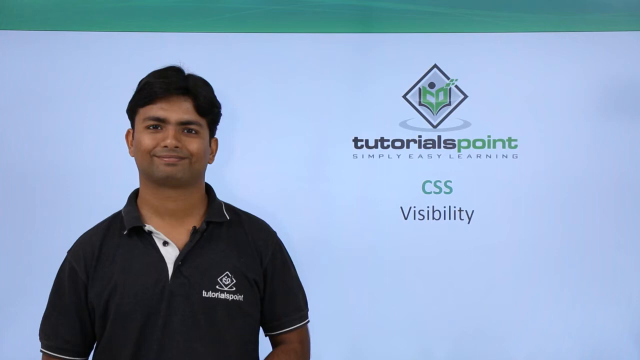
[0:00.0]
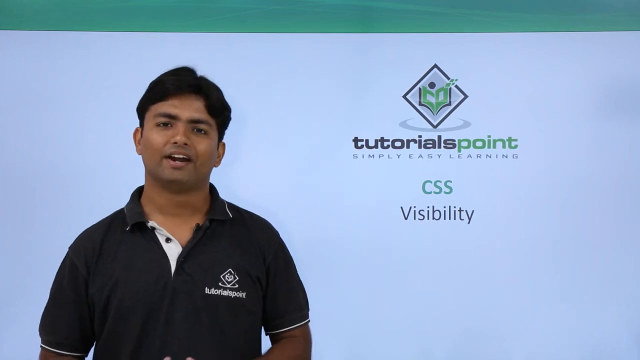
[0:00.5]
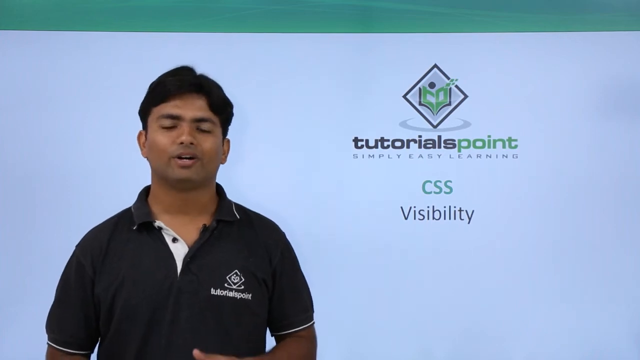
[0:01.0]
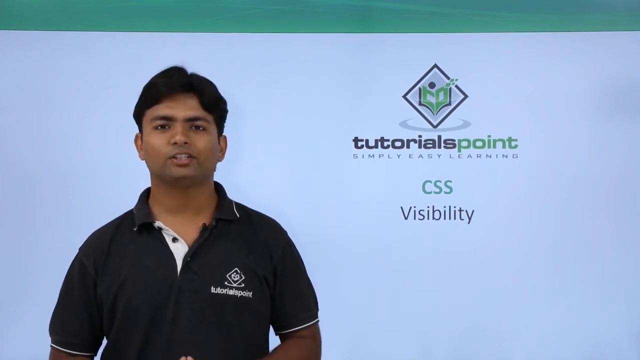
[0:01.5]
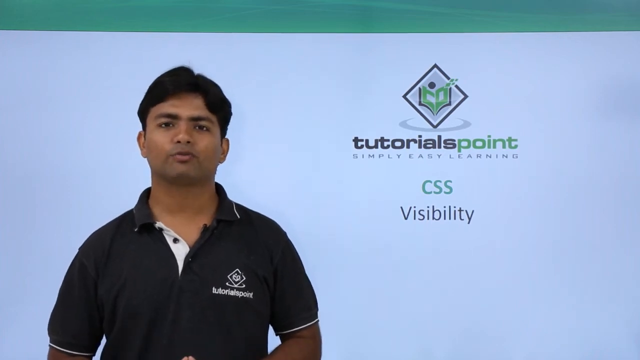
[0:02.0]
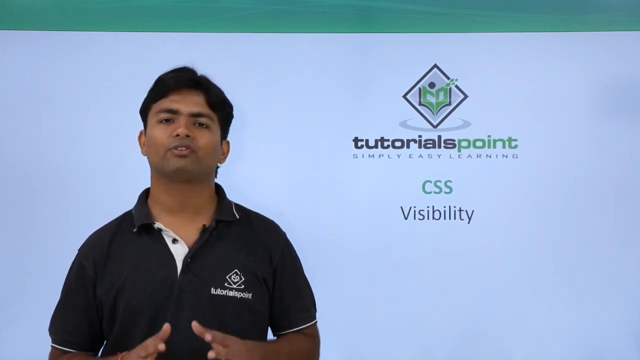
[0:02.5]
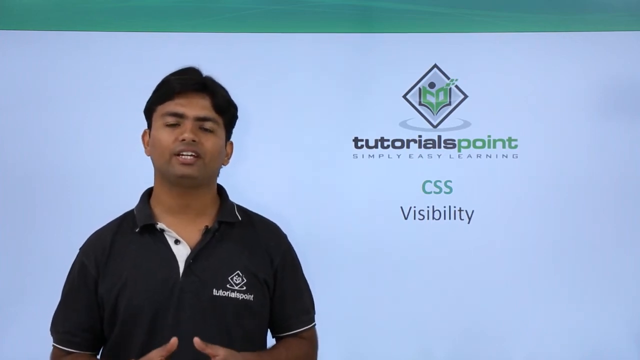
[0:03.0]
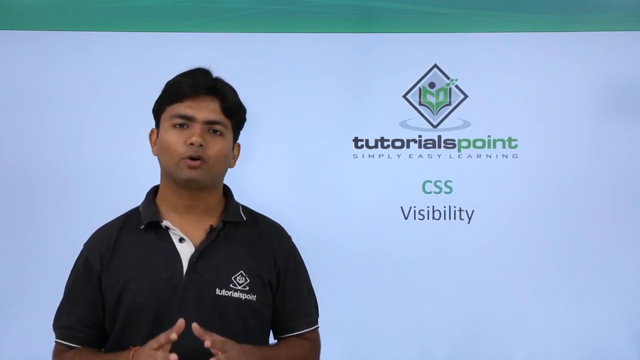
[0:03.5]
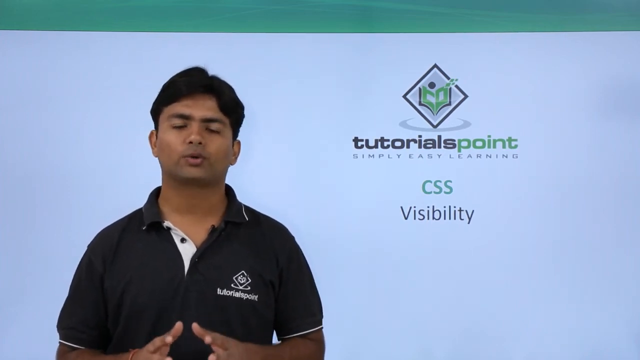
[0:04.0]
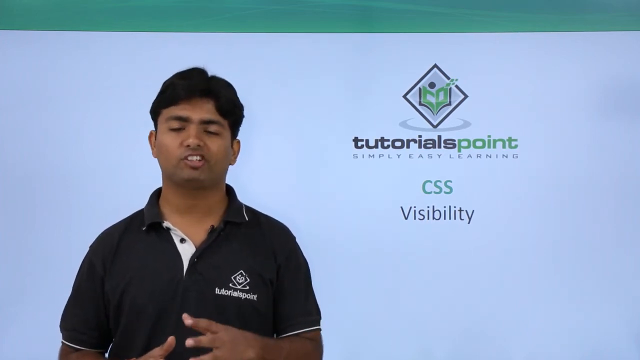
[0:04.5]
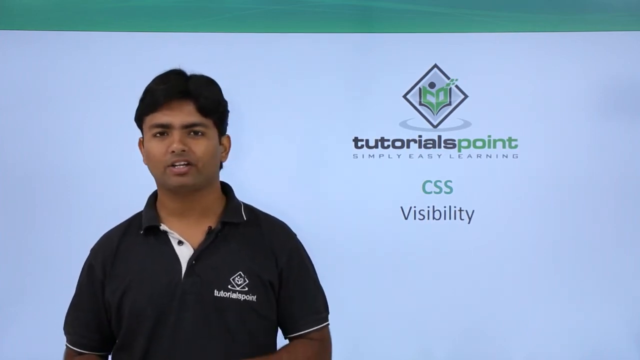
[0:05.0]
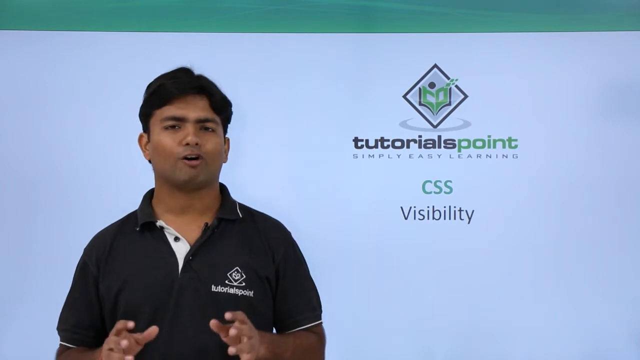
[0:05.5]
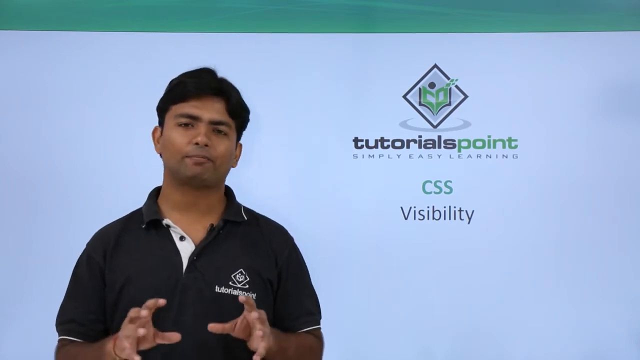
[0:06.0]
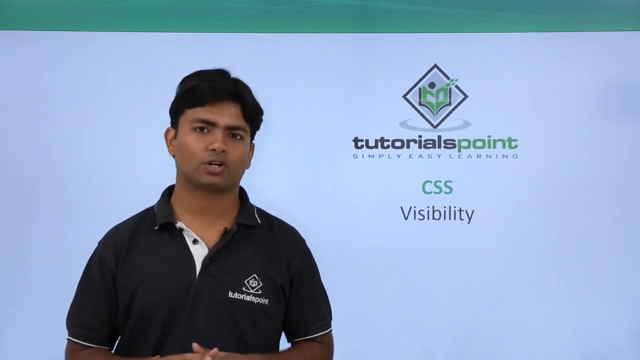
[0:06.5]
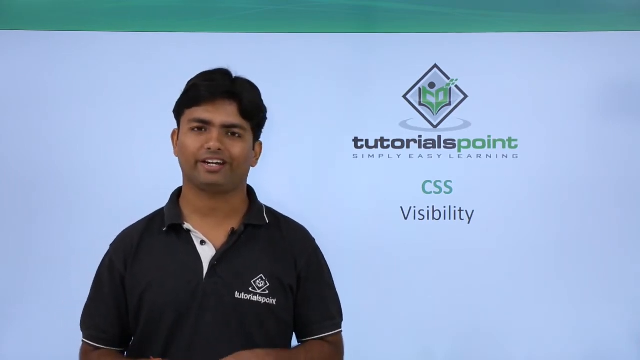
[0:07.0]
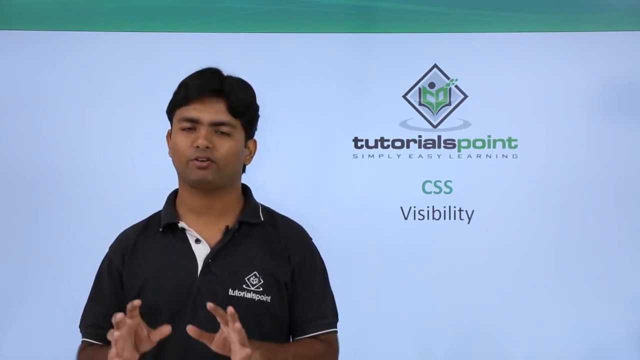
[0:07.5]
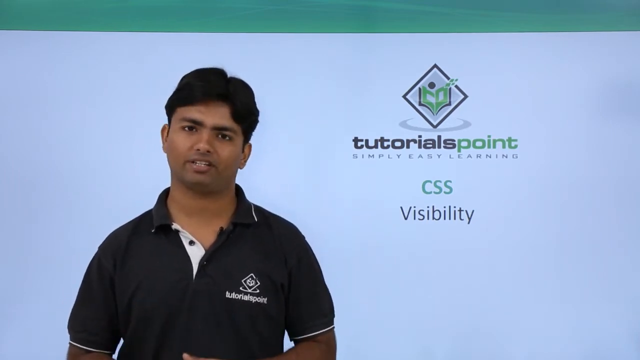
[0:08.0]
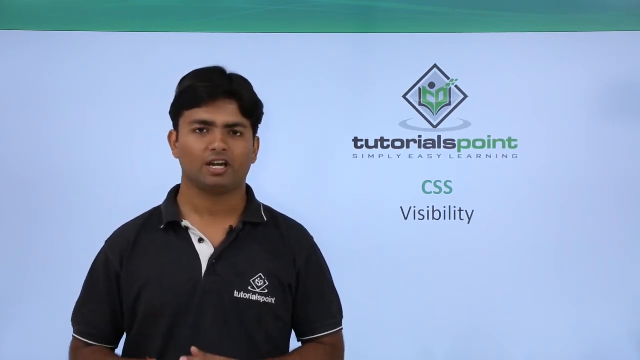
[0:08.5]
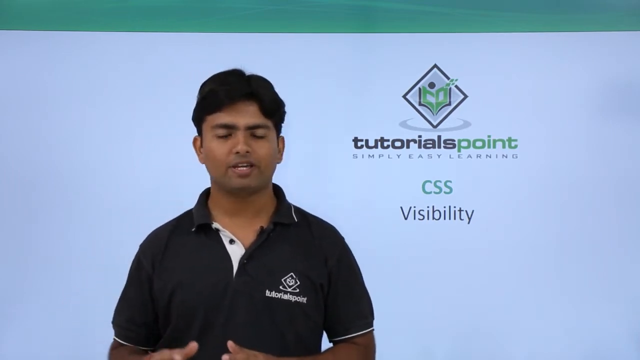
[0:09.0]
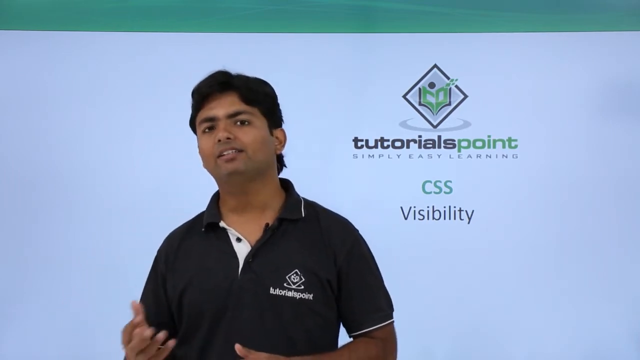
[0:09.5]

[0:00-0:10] A brown-skinned man, probably aged 20 to 25 and apparently Indian or East Indian, wears a black shirt. On-screen text reads "tutorial point CSS visibility" on a light background, probably part of a tech tutorial about CSS styling for the web. He appears to be explaining the topic. The shot stays on this one man, with a light blue "tutorials point CSS visibility" intro screen.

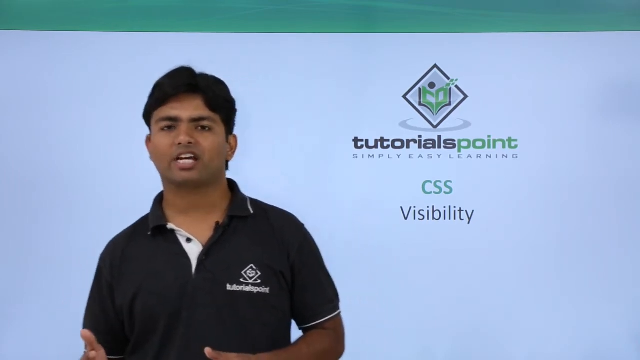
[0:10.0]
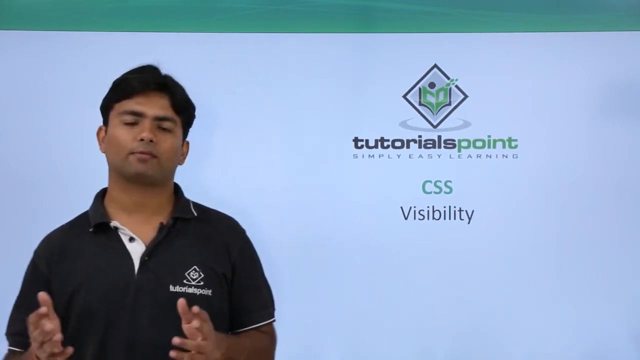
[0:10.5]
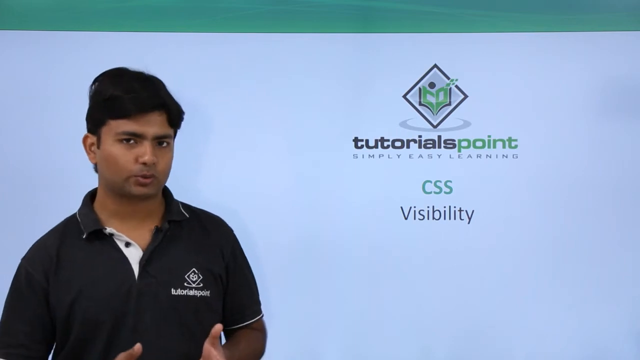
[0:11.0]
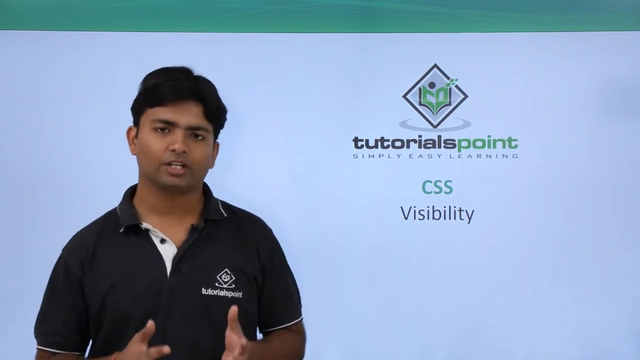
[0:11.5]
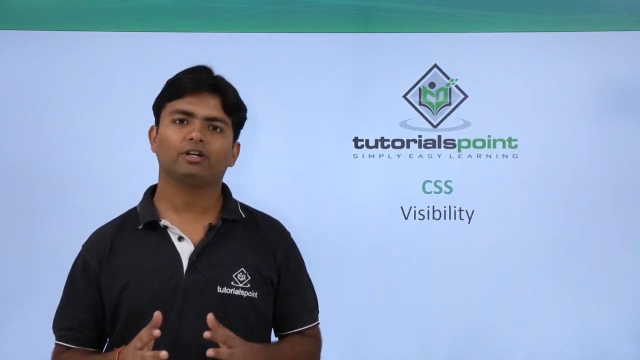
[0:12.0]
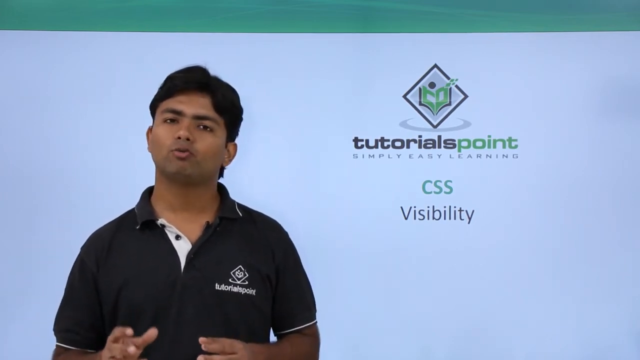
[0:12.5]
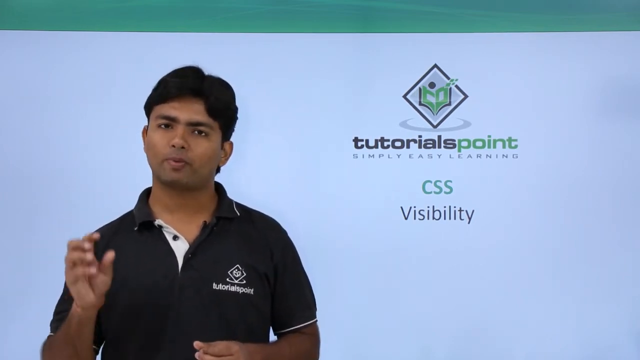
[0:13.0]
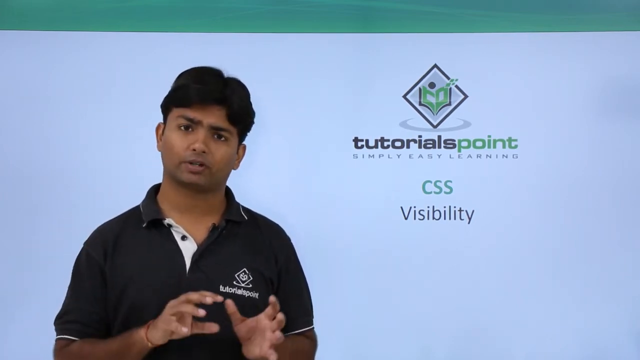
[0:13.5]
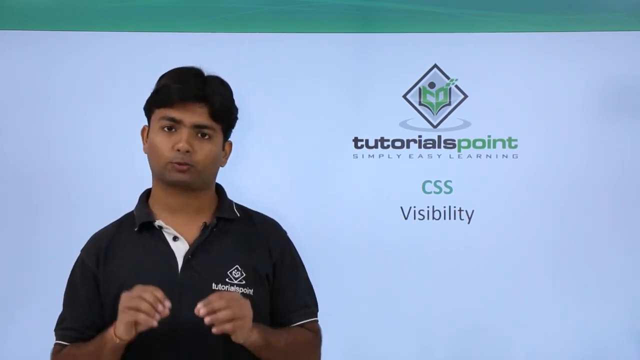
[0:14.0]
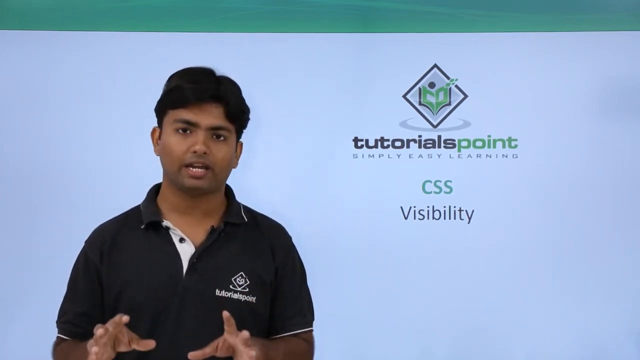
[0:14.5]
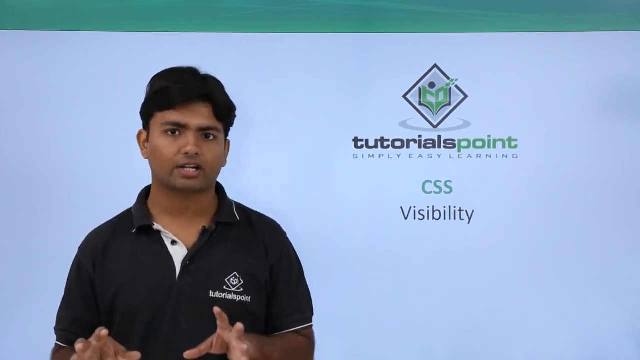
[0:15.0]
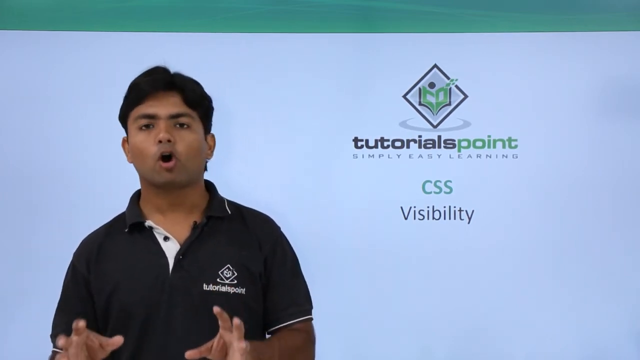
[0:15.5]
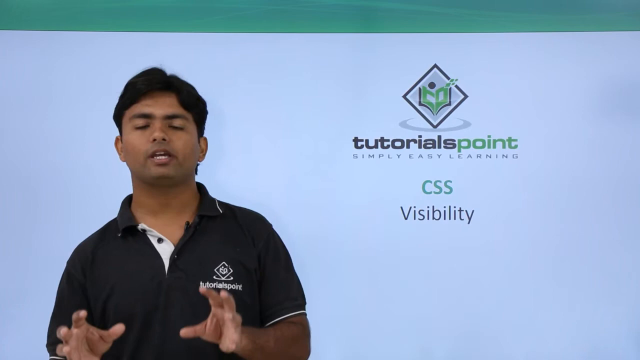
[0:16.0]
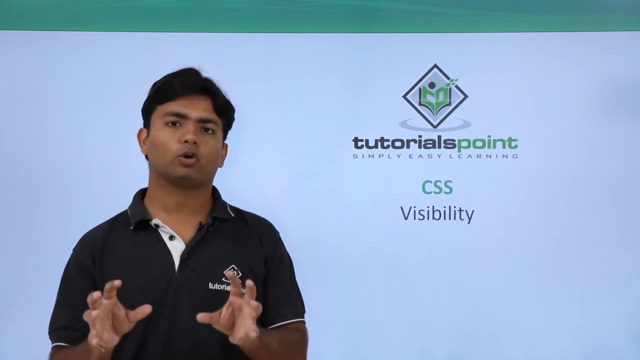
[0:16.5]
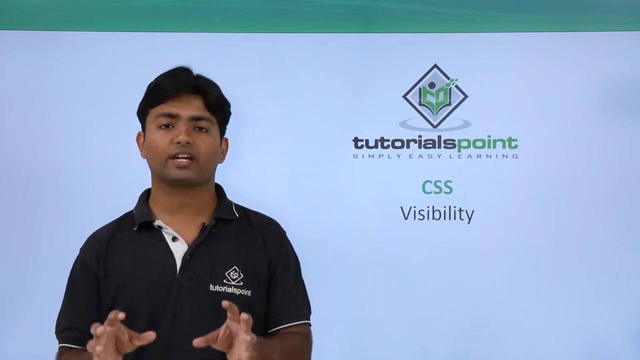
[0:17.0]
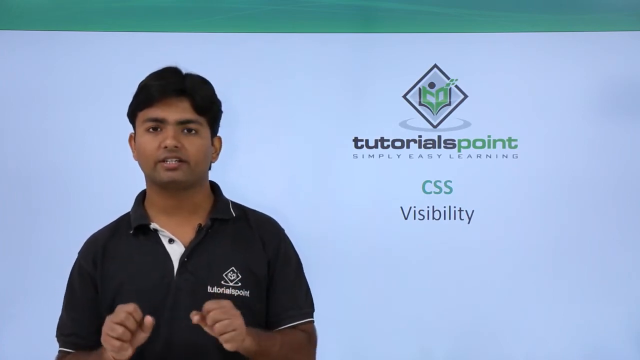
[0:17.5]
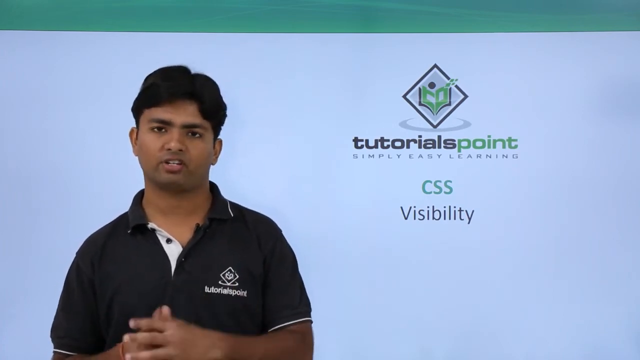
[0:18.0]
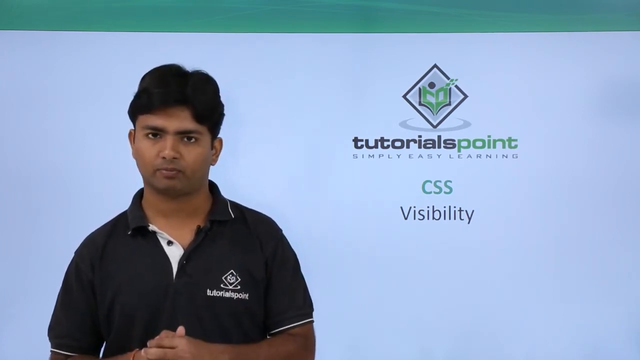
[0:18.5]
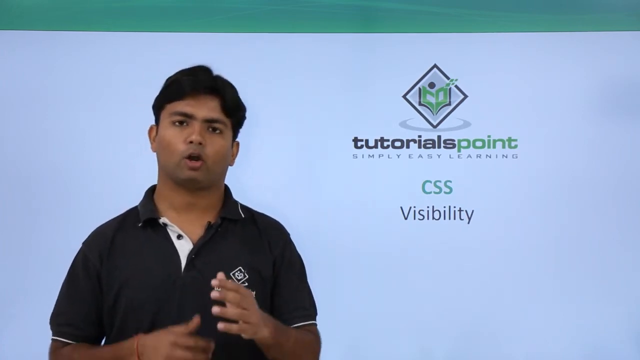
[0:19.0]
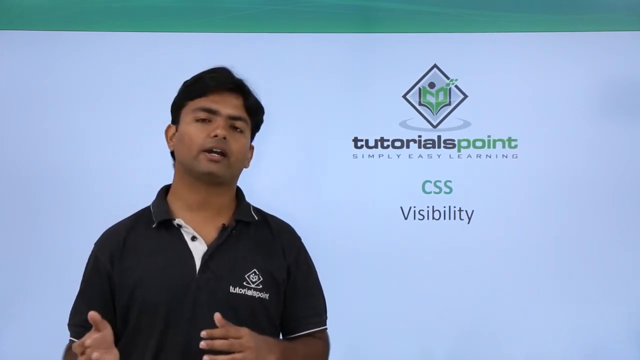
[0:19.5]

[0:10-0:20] The East Indian man, probably around age 20 to 25, with short black hair and a black shirt, appears in front of a background showing "tutorial point CSS visibility," probably in an HTML/CSS web development tutorial. The video then cuts to a code editor showing HTML code, with some CSS probably visible in the code as well.